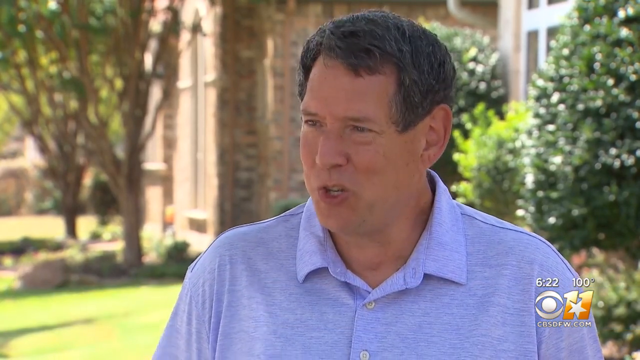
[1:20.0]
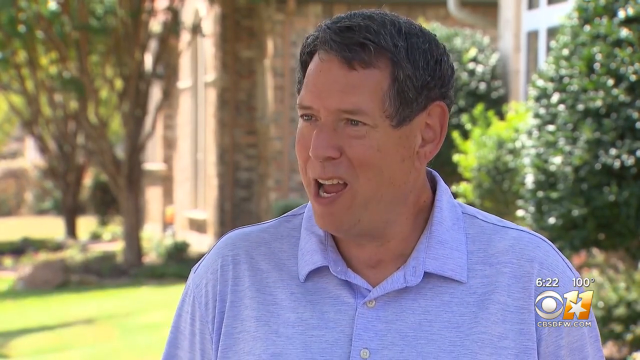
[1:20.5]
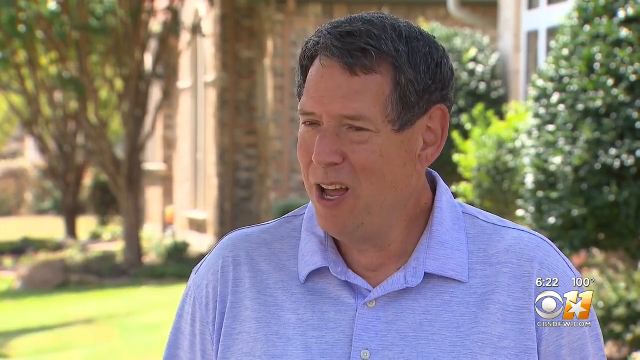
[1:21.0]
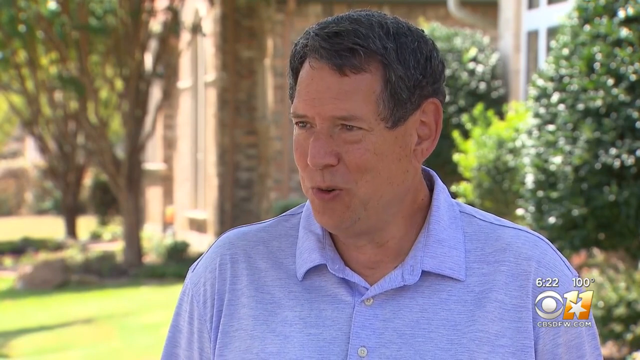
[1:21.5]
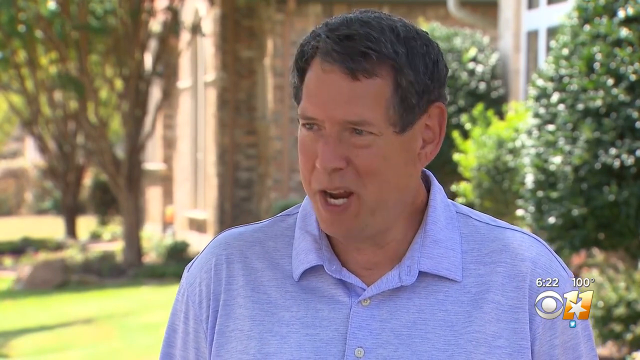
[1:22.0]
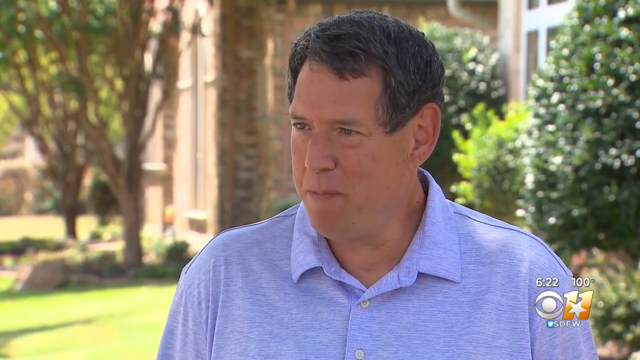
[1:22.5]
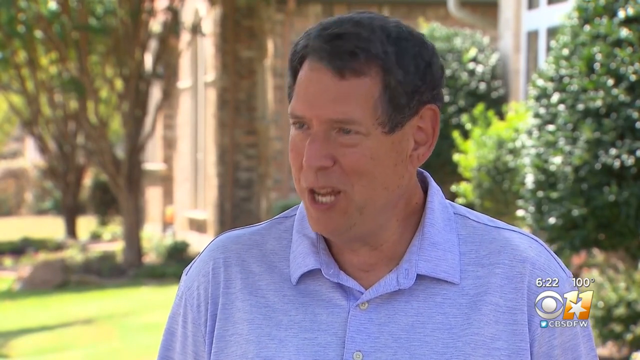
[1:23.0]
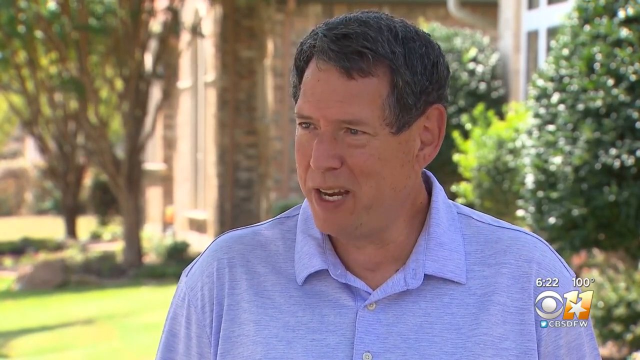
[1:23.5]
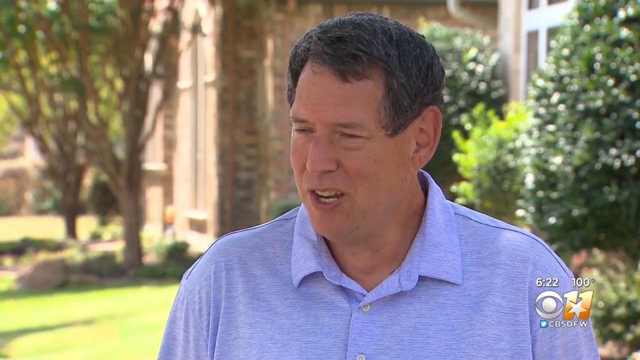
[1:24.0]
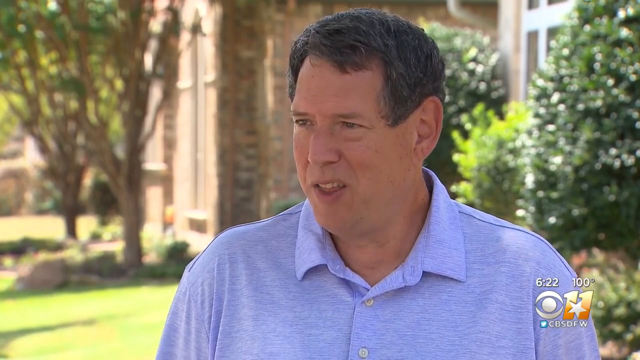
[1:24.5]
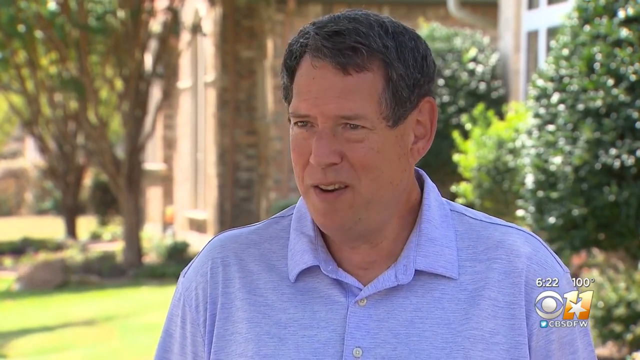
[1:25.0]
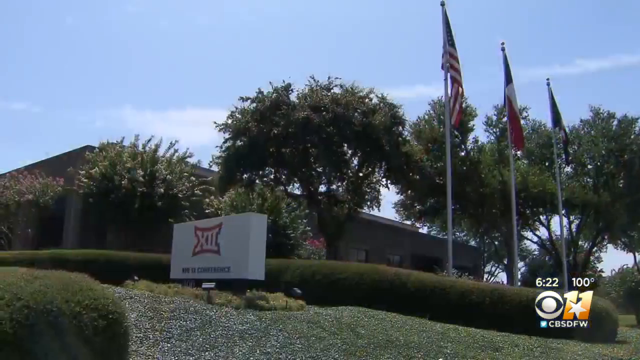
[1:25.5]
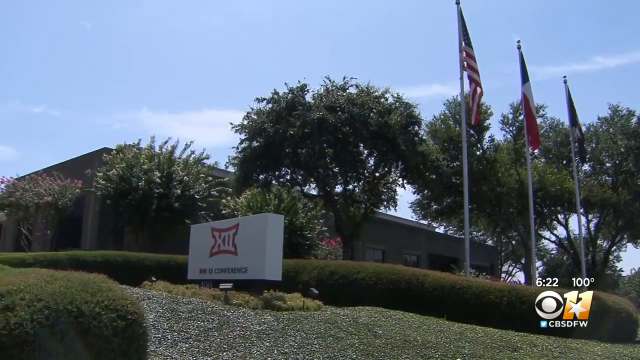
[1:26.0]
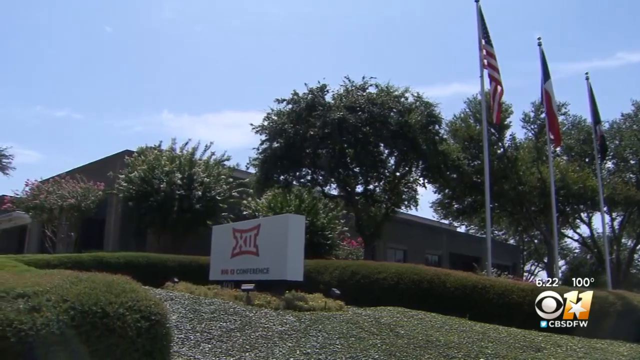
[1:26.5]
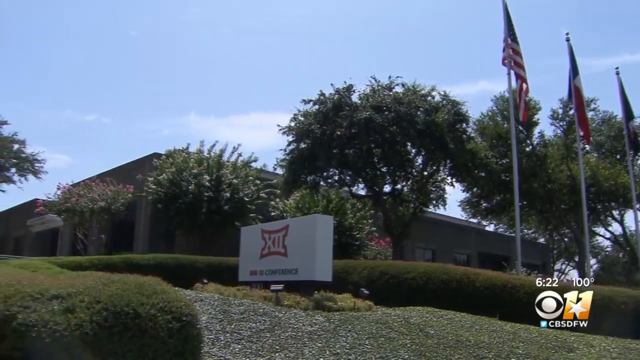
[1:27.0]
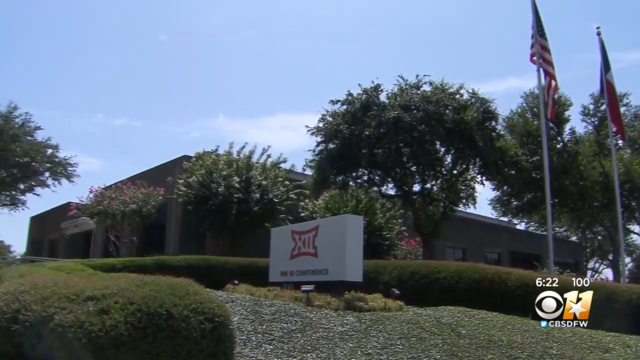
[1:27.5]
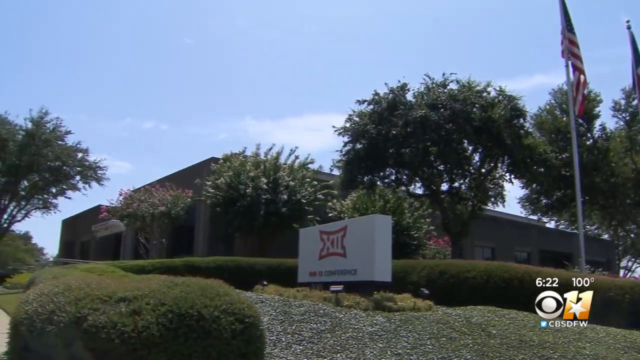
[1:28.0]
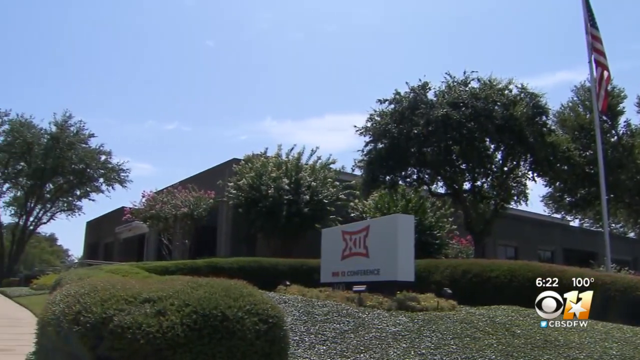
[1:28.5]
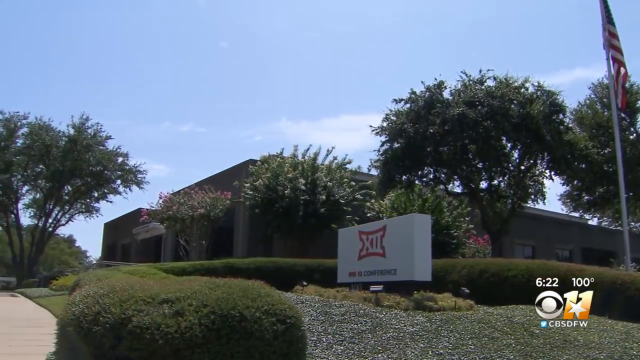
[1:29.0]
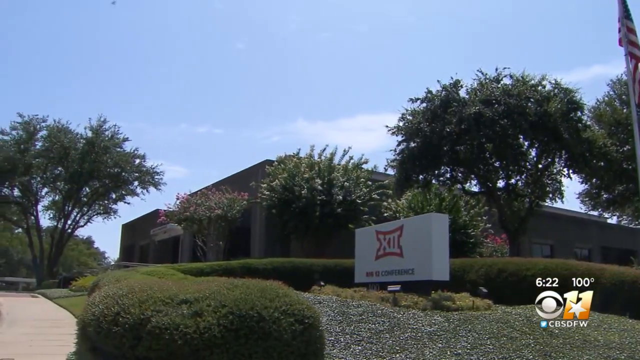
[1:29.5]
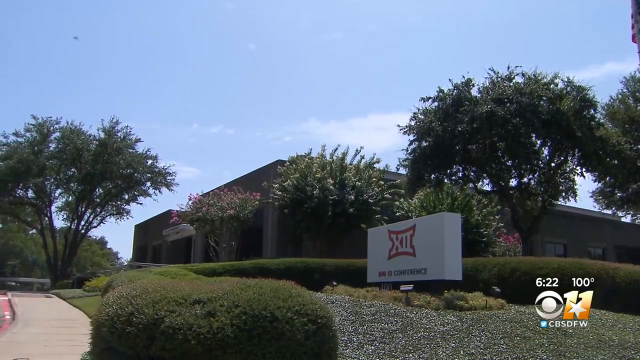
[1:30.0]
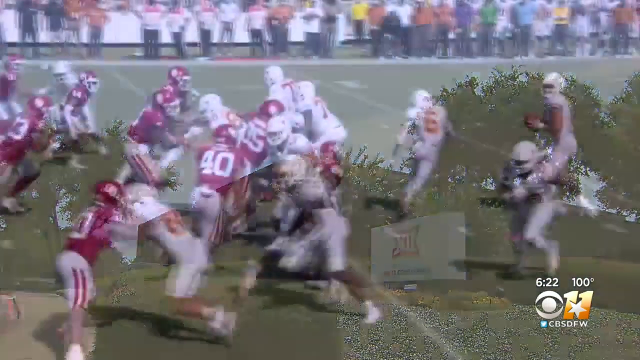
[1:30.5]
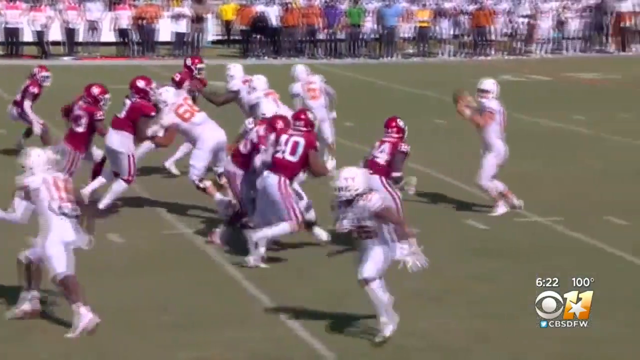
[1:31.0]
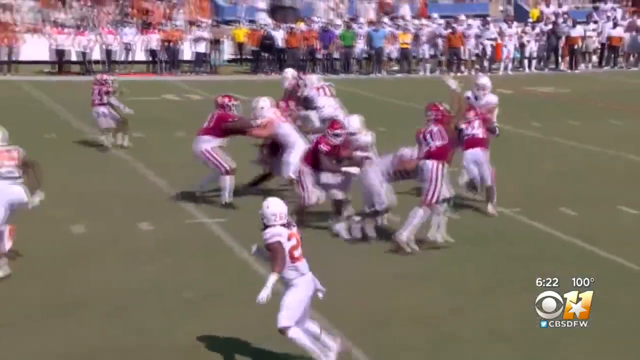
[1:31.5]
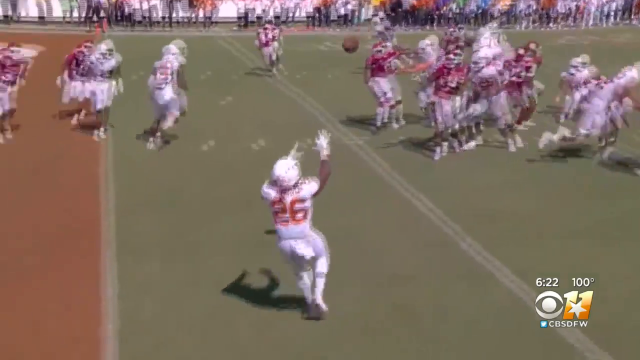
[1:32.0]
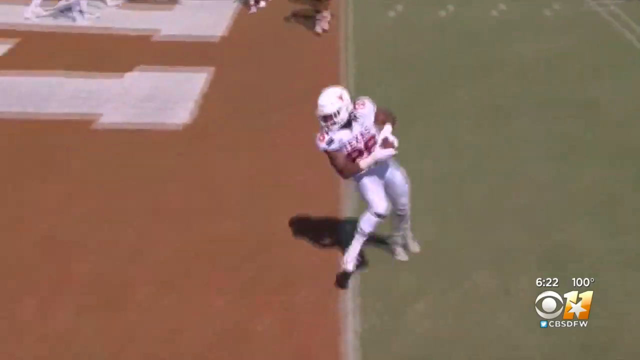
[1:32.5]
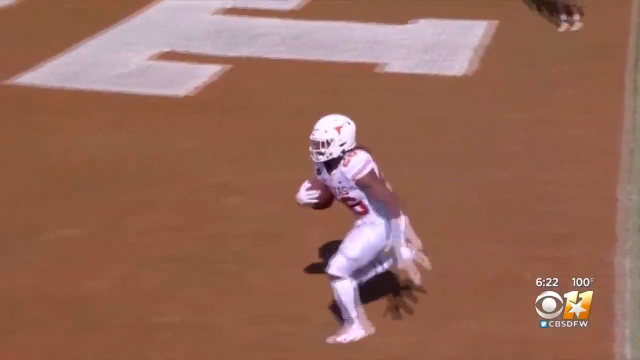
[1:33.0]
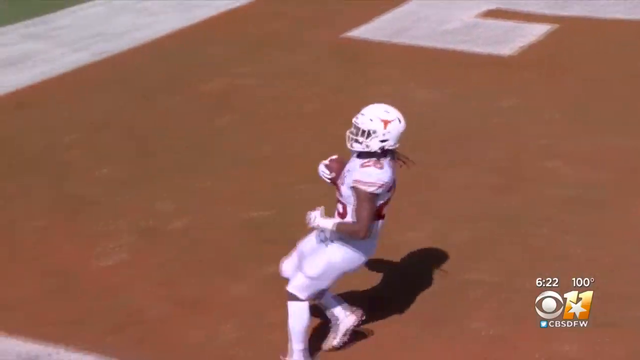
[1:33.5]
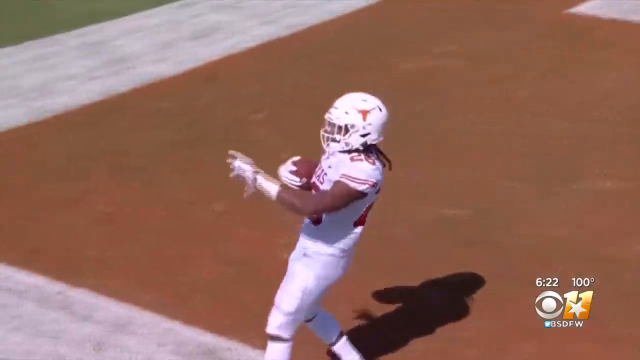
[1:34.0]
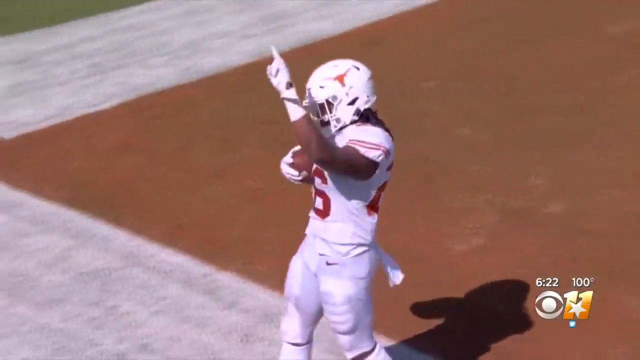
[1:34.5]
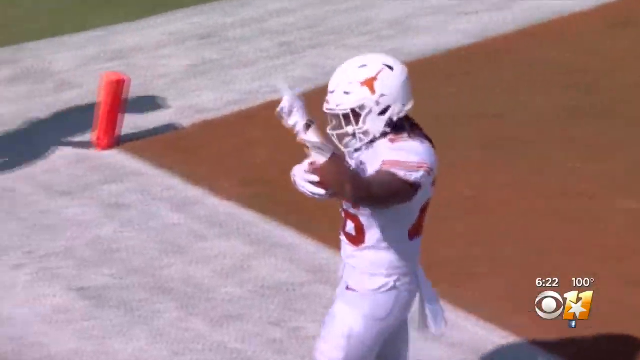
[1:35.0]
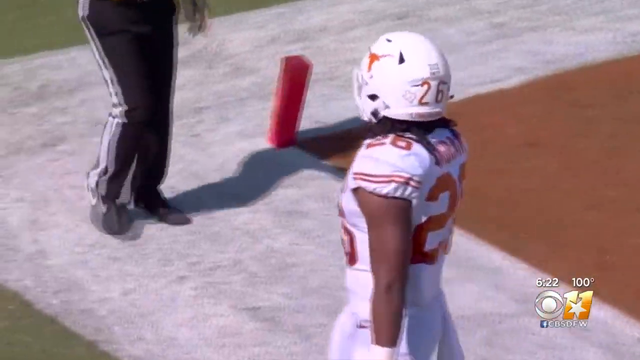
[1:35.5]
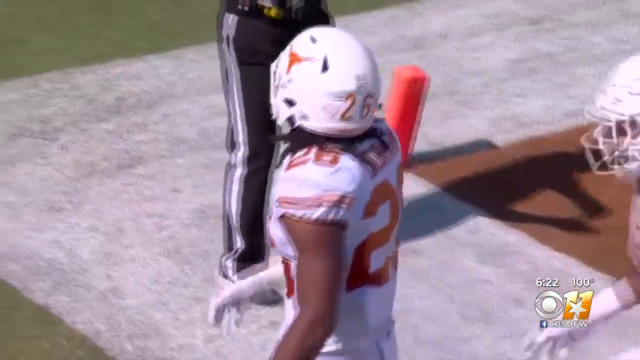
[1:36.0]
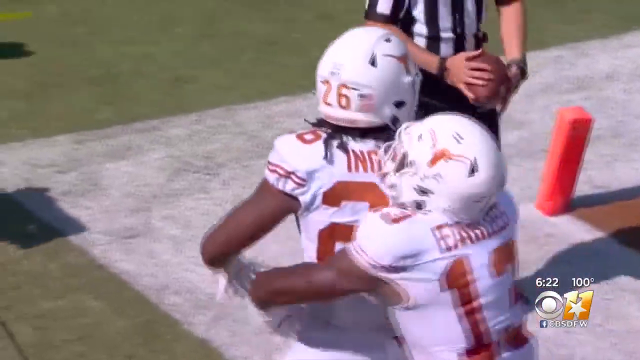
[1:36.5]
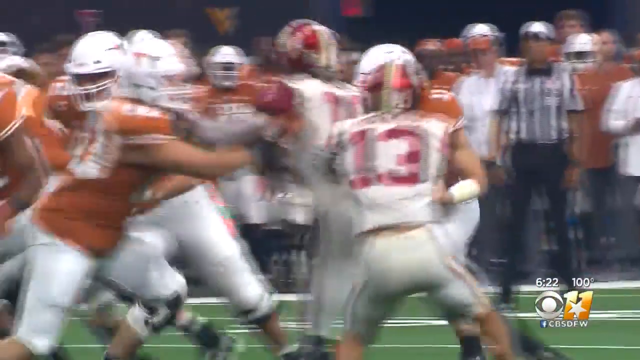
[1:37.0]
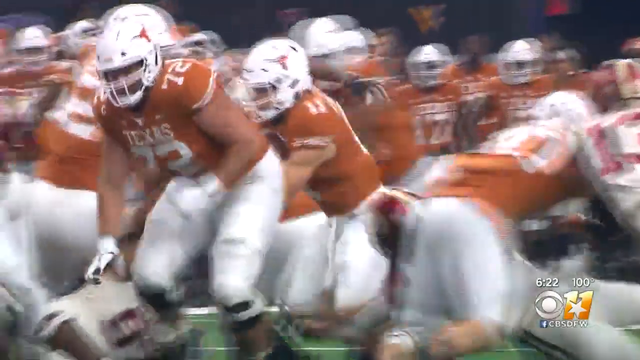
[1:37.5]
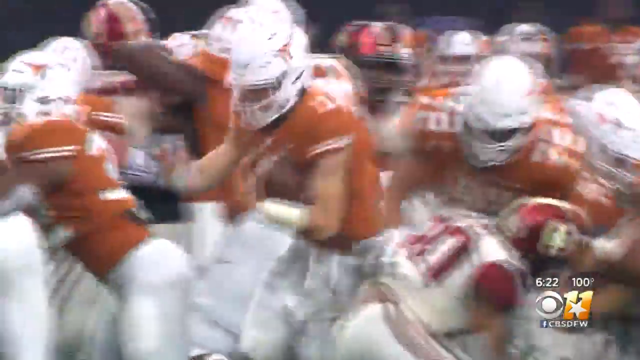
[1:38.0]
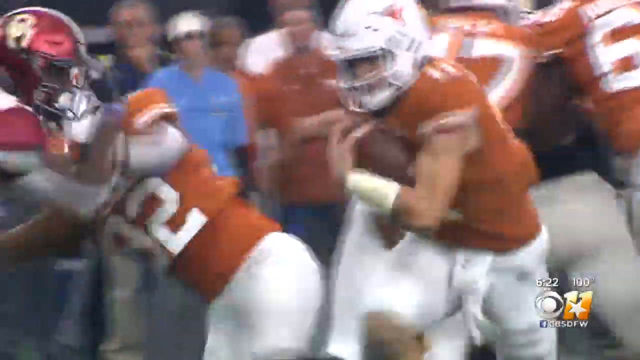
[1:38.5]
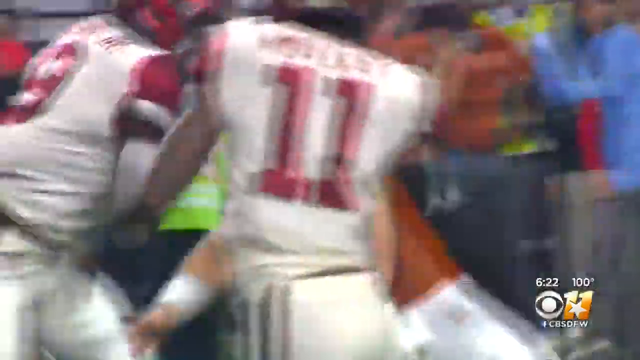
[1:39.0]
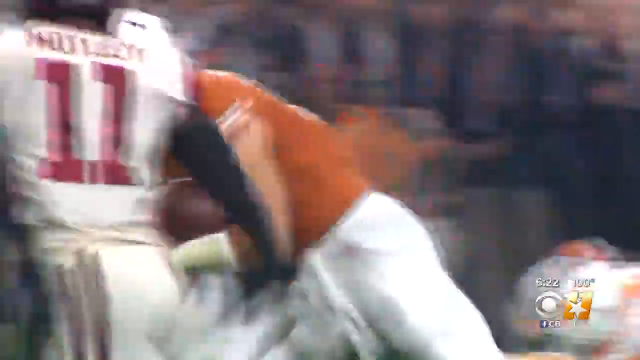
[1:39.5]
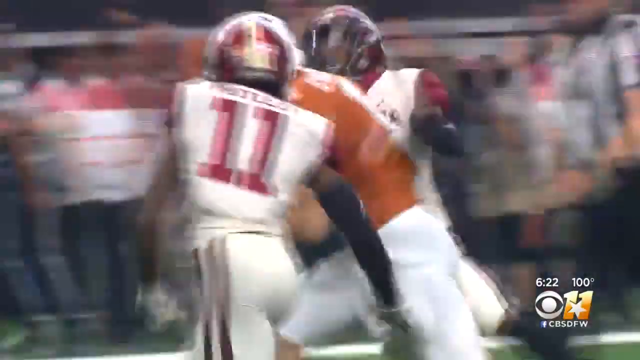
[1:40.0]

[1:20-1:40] The interview continues with a close-up of Chuck Cooperstein as he talks. The camera then pans around the headquarters of the Big 12 conference, where there are two flags on flagpoles, one of them the US flag, in a very slight wind. The video returns to footage of the team in red and the team in white playing American football. Number 26 catches the ball that has been thrown in the air and runs, running to the side and then passing the ball to the referee. More footage of the red and white teams follows; the team in red wear t-shirts that say "Texas" and run with the ball. There is a big T on the field, possibly indicating that it is the Texas team's stadium.